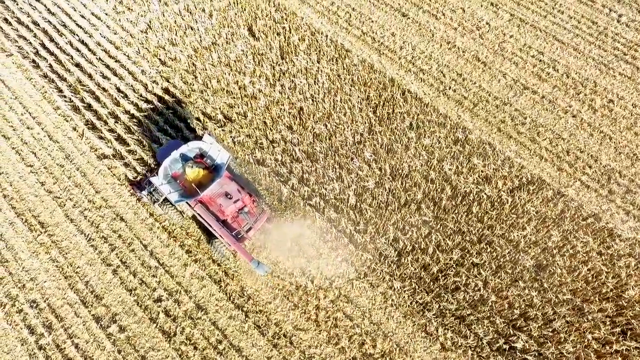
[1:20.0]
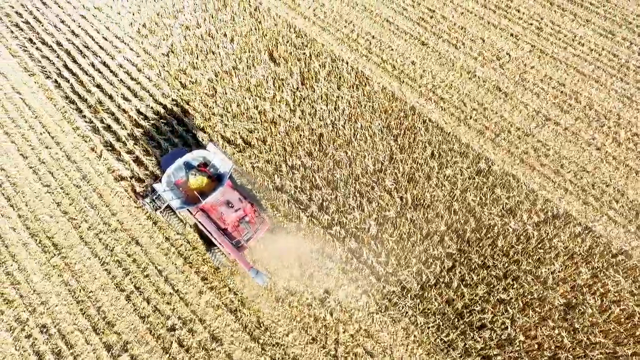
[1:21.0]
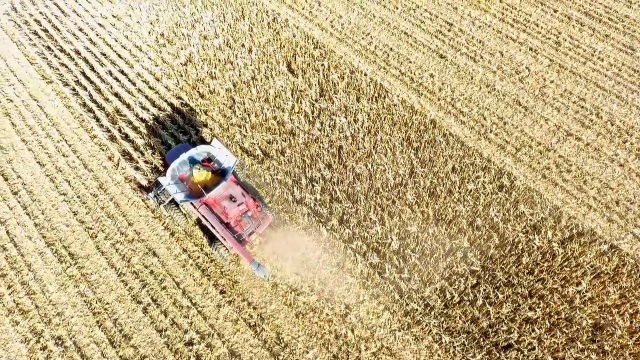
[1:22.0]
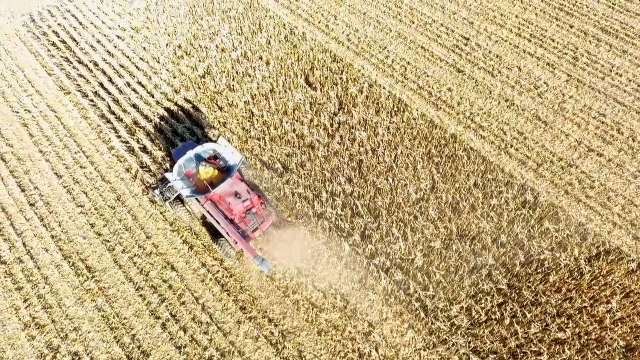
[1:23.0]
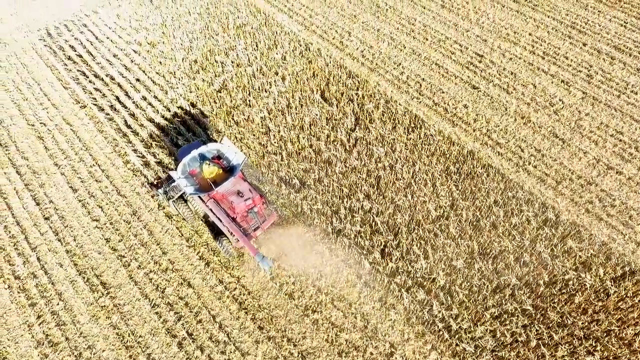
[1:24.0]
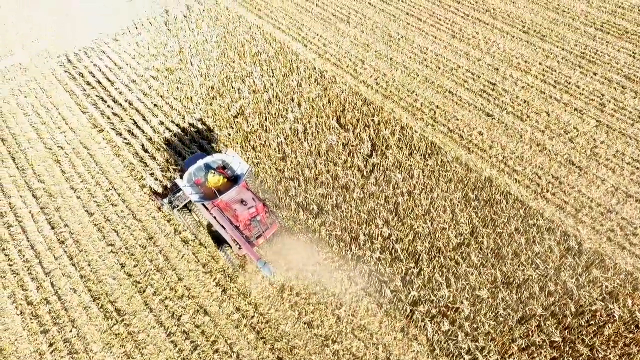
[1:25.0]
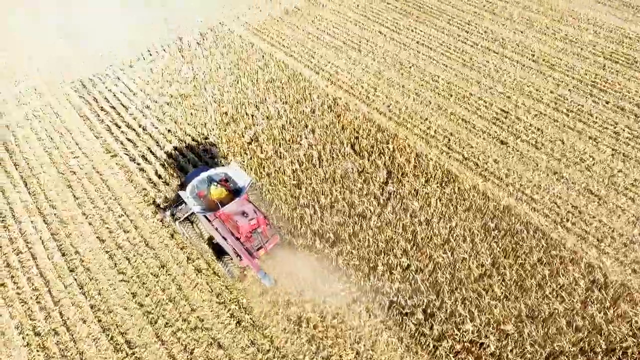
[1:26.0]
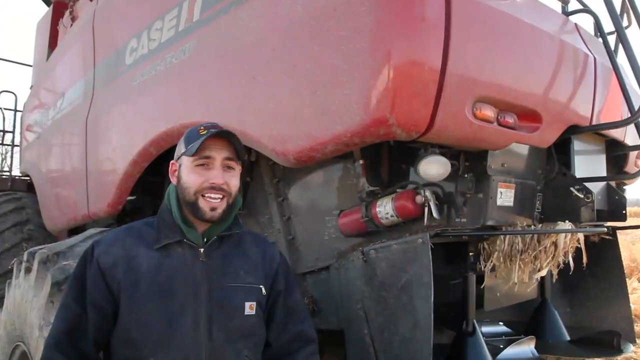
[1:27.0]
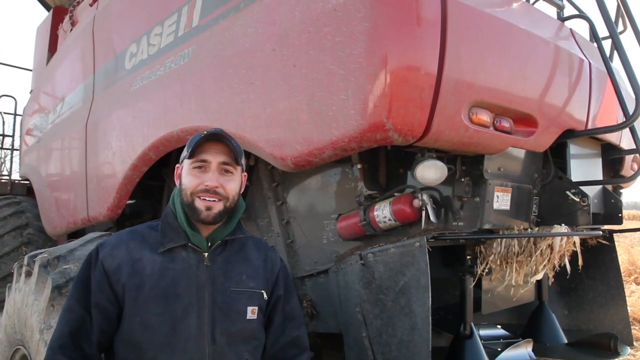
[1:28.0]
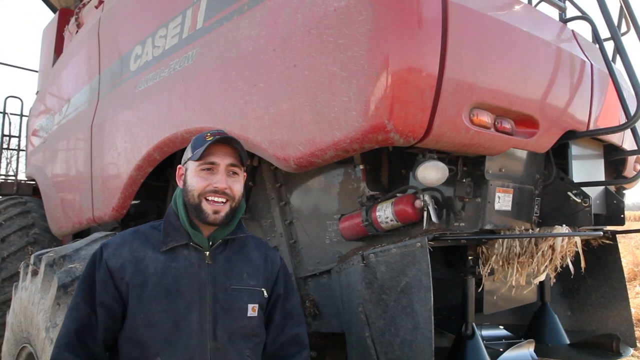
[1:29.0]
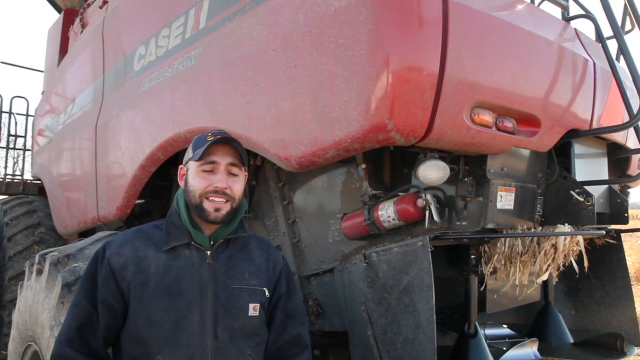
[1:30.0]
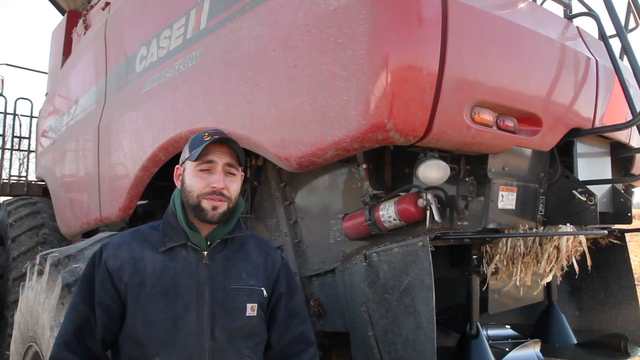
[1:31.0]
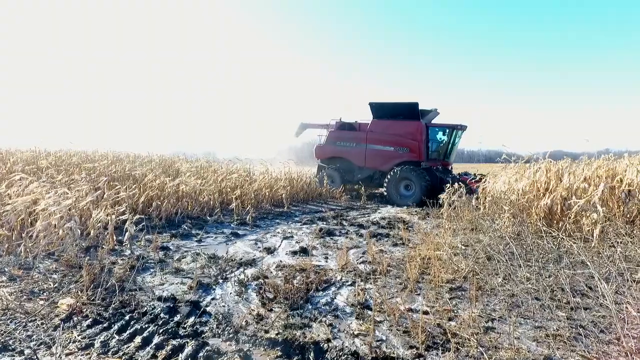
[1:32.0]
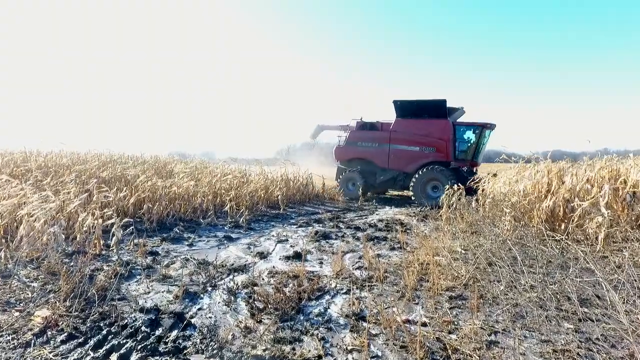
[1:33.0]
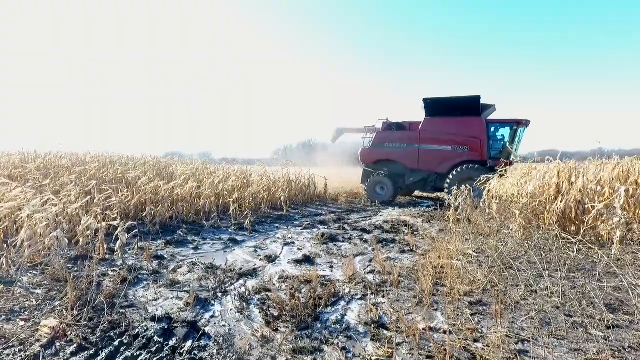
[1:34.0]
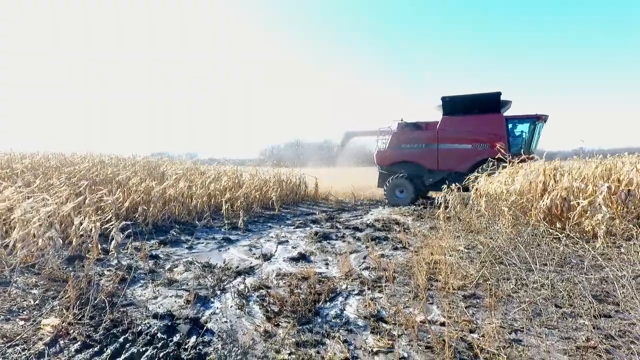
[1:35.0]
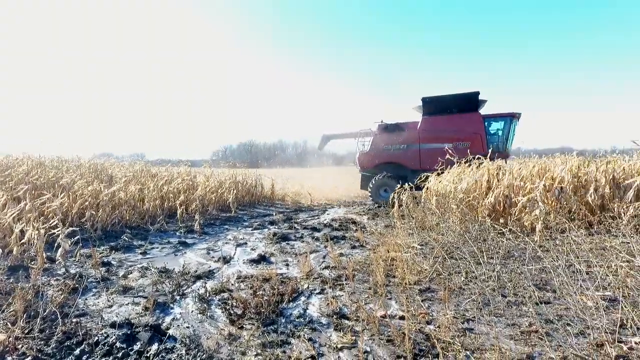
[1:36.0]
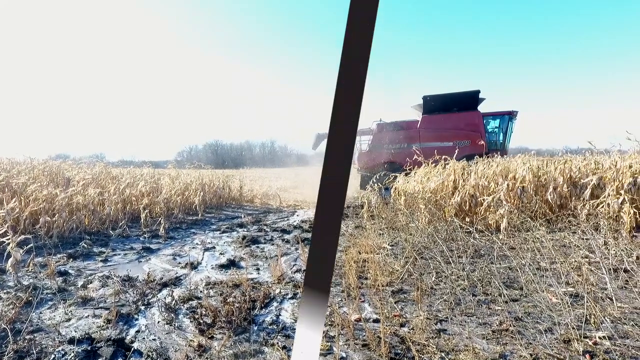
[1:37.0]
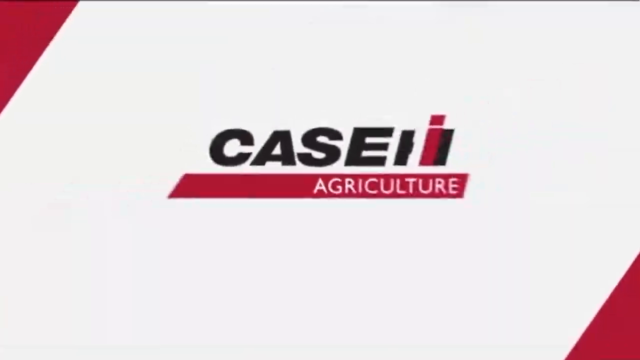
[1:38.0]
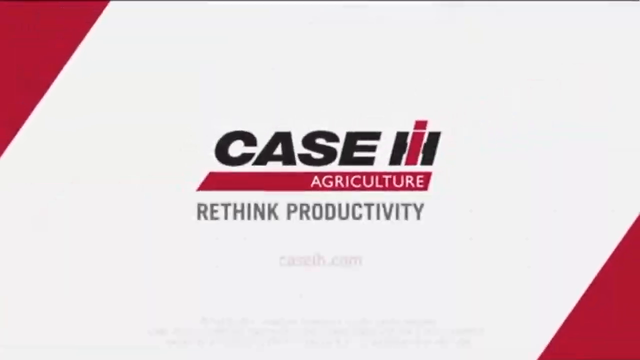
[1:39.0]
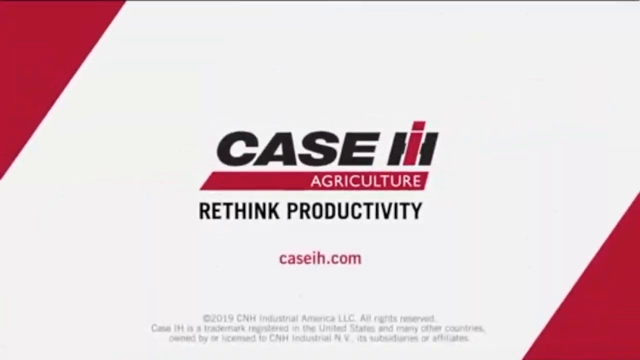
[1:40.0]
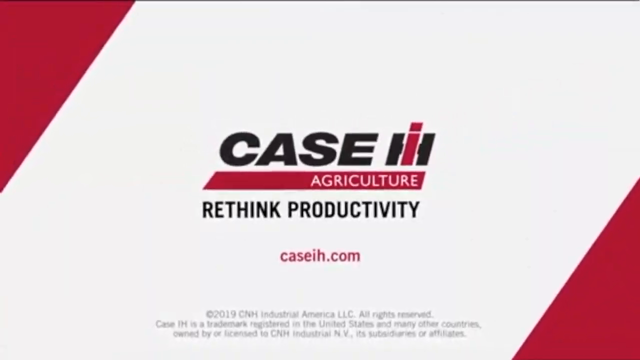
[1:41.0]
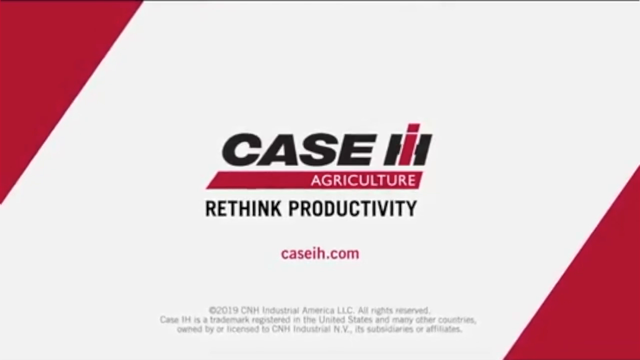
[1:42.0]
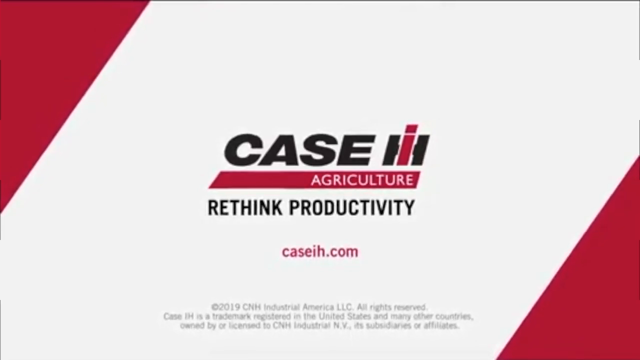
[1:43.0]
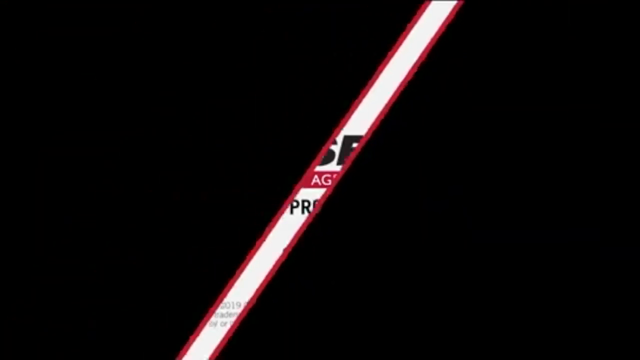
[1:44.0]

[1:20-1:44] In a bird's-eye view, the tractor seems to be going roughly diagonally toward the top left of the screen. The land has been tilled on the left and the right, leaving only a section of wheat or some other crop in the middle untilled. The video returns to the man in the navy blue zip-up jacket with a green hoodie underneath and a ball cap, talking to the camera; he has some facial hair. Next, the red tractor moves across the screen from left to right with a pipe hanging down, and it looks like it is in the middle of tilling; the man inside is visible. The video ends with the same screen it started with: a white background with a red triangle in the top left corner and the bottom right corner. Black all-capital letters read "CASE", followed by an H with a red lowercase i on top of it. A red banner shows the word "AGRICULTURE" in white all capitals. Below, in smaller black capitals, is "RETHINK PRODUCTIVITY", and below that, in red, the website "CASEIH.com".